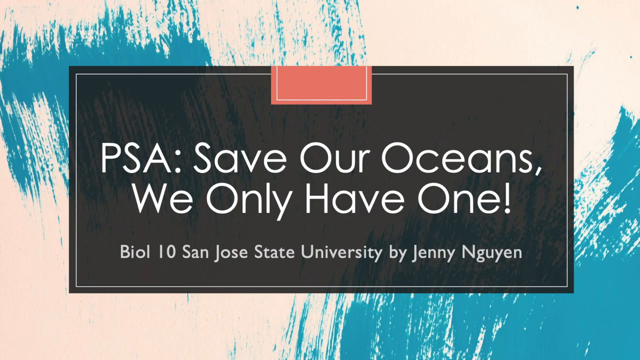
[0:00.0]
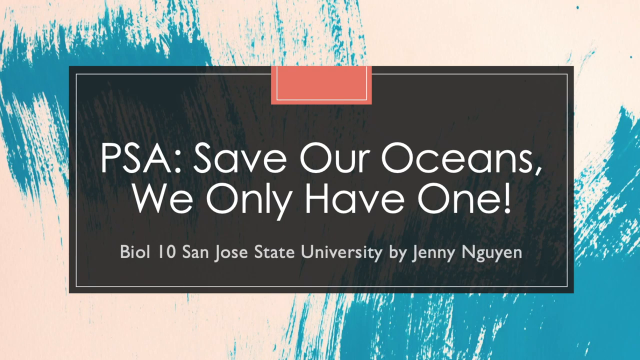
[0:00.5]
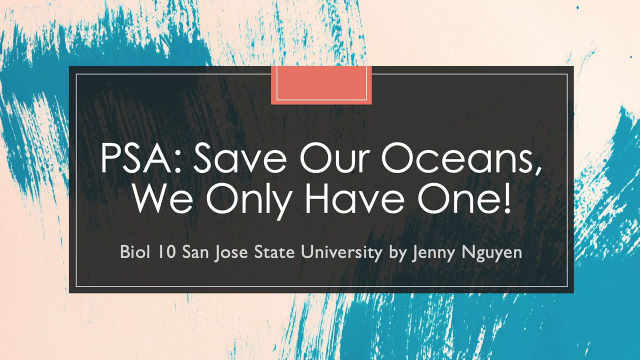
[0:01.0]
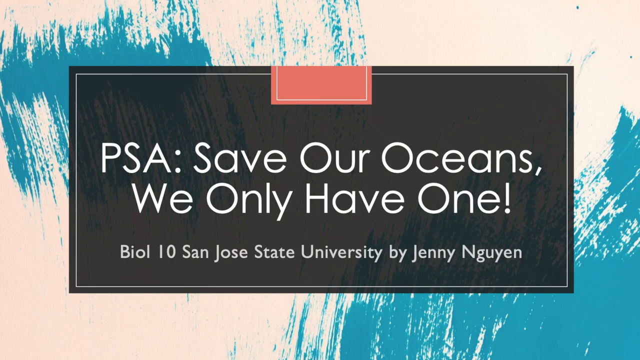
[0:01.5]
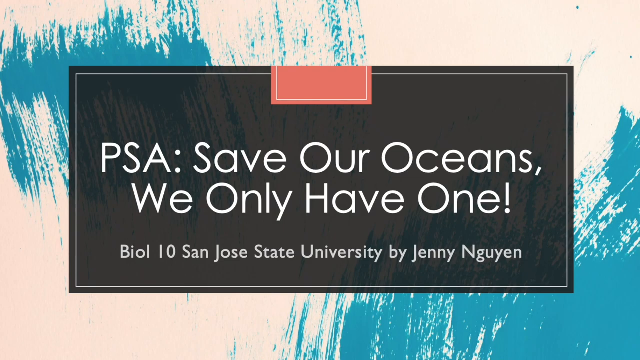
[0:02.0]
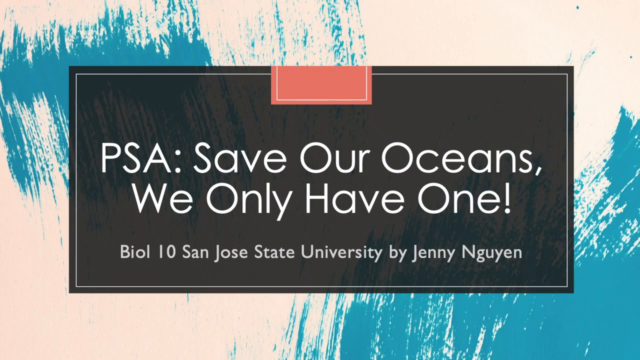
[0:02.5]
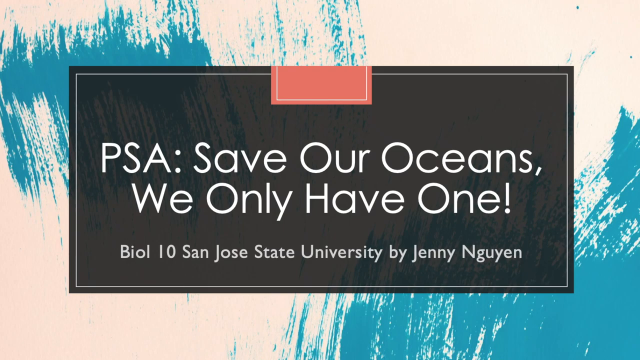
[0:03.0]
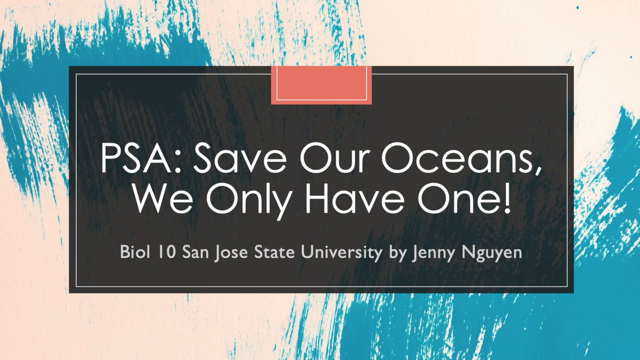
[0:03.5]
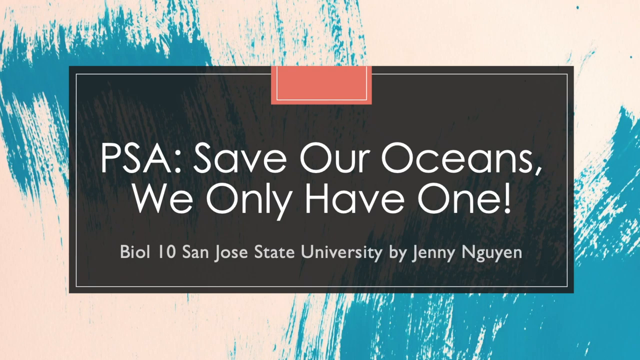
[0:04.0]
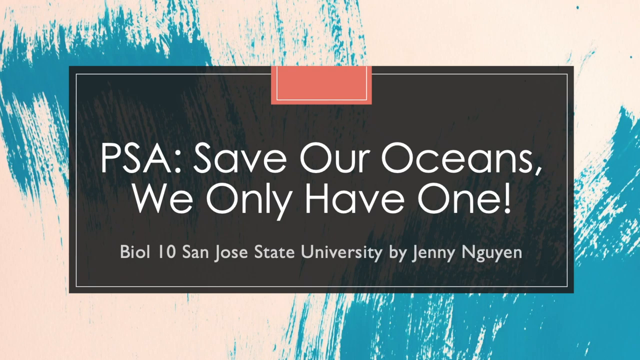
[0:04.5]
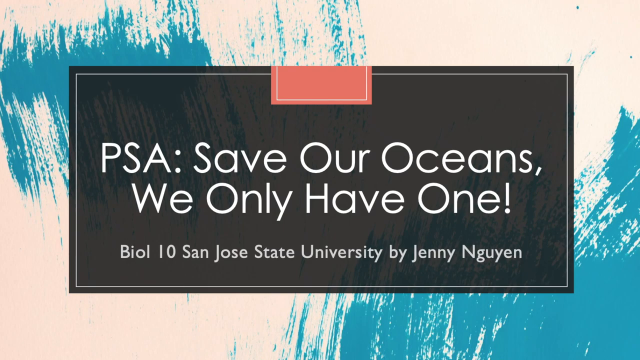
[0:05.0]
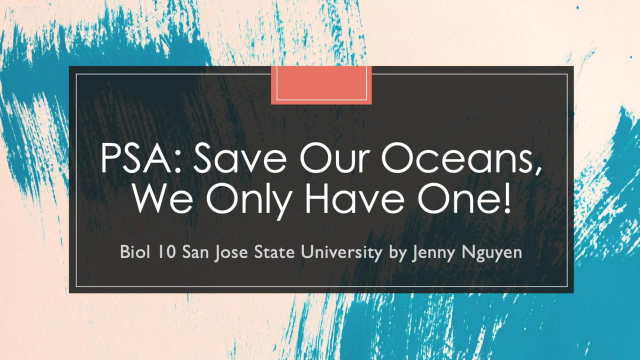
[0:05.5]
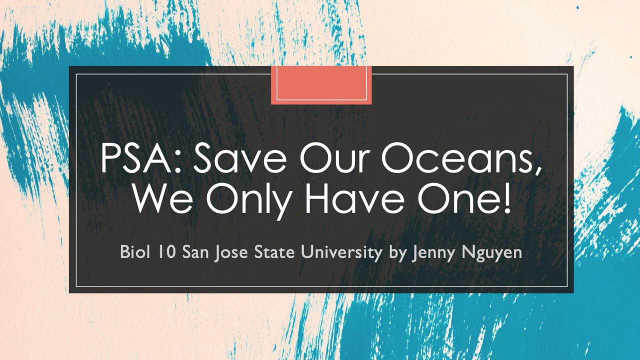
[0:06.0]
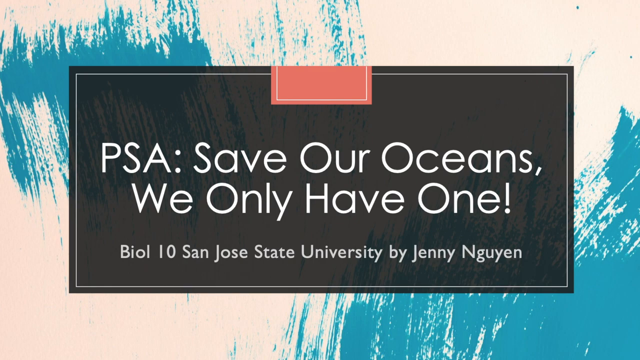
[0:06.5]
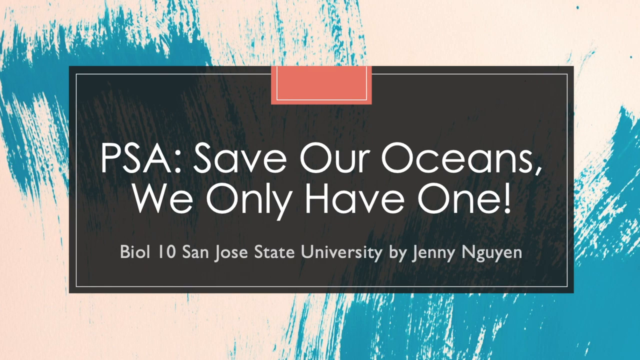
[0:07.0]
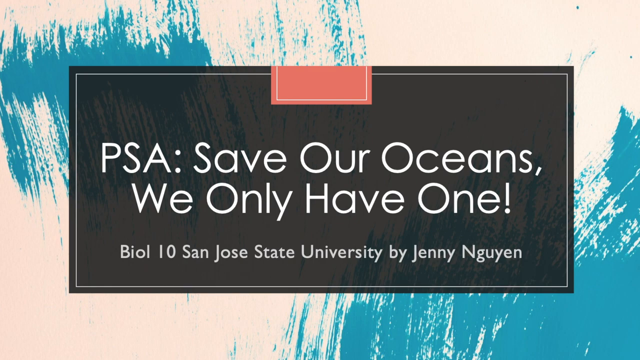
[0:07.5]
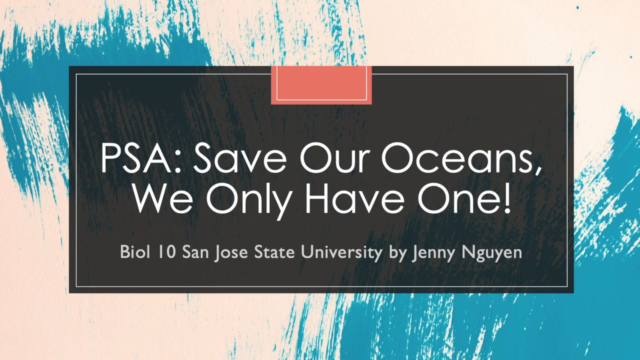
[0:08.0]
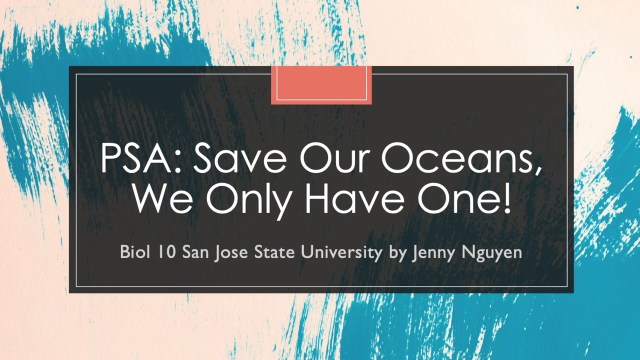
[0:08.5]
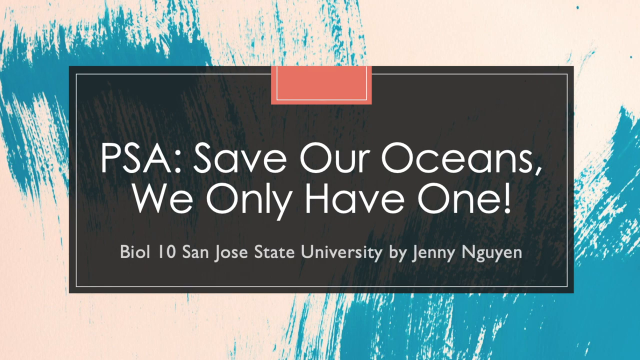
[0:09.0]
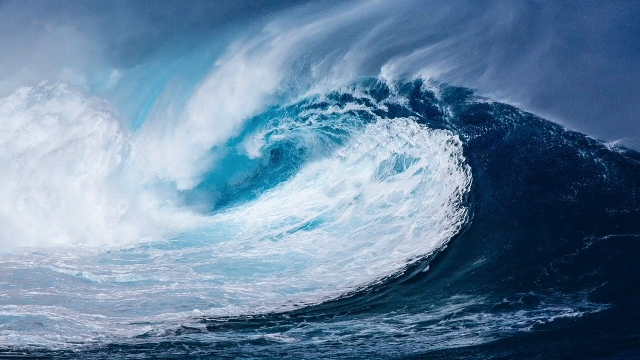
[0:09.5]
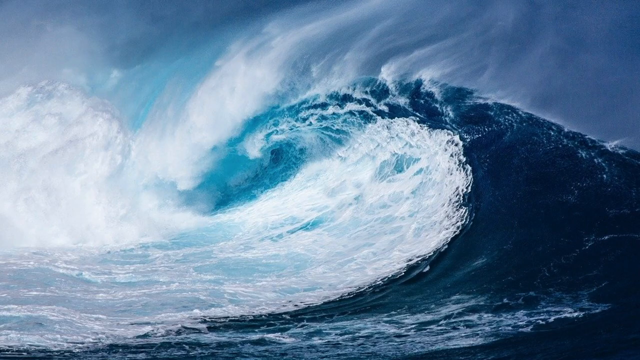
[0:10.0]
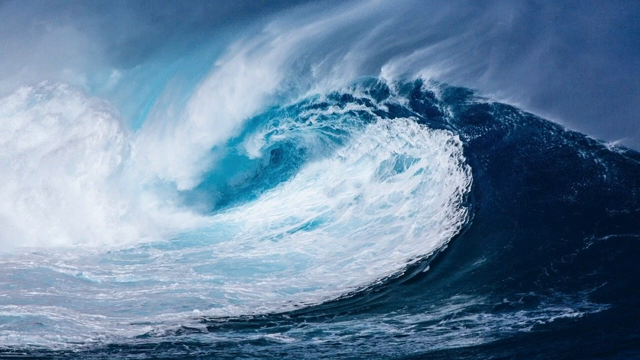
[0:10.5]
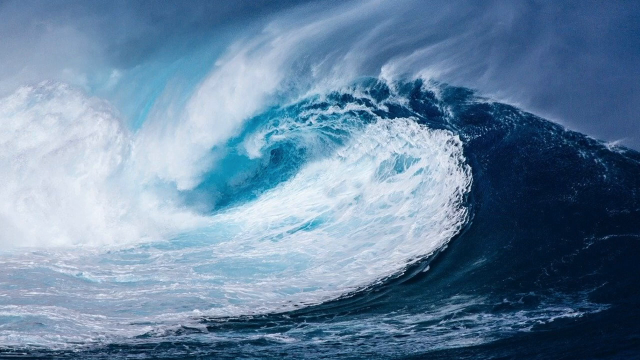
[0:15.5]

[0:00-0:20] The video opens on a title screen that reads "PSA Save Our Oceans We Only Have One" in white font, with the first letter of each word capitalized and "PSA" in all caps; this is the largest text on the screen. Below it, in smaller white text, it says "Bio 10 San Jose State University by Jenny Guillen". The text is on a transparent black rectangular background with a white border, and above it, in the middle of this black background, there is a very light peach-red header rectangle. Behind everything is a multicolored, rugged-looking, paintbrush-style background in beige and turquoise blue. After the title is shown for about 10 seconds, it transitions to an image of a dark blue wave heading toward the shore.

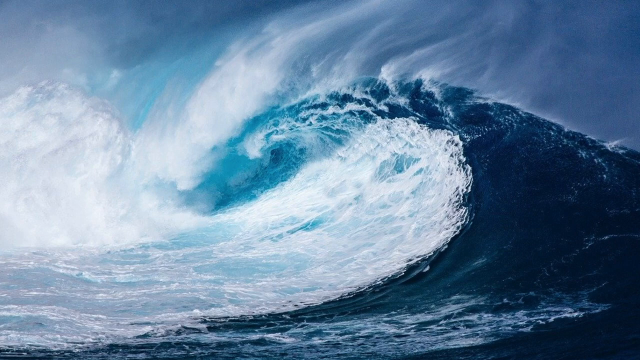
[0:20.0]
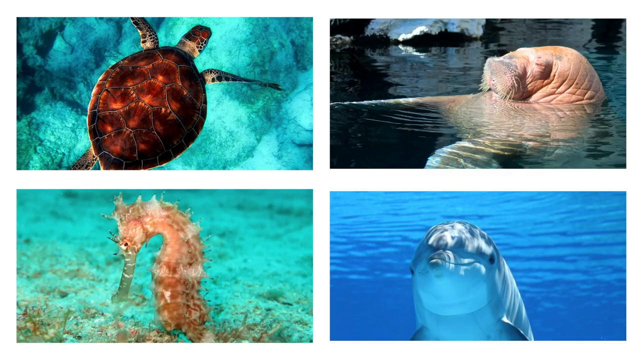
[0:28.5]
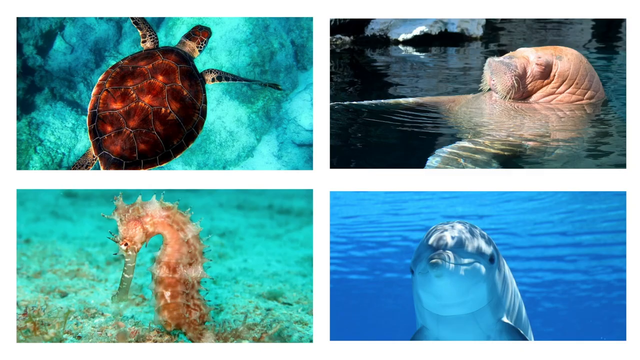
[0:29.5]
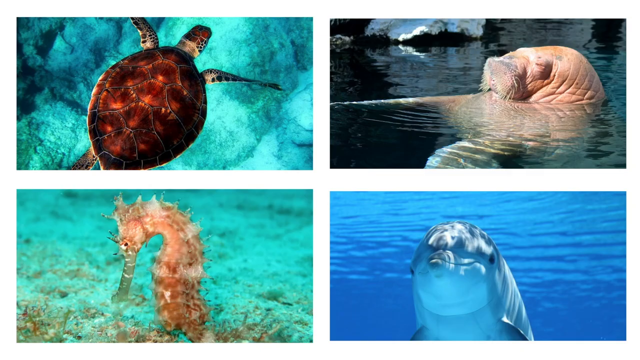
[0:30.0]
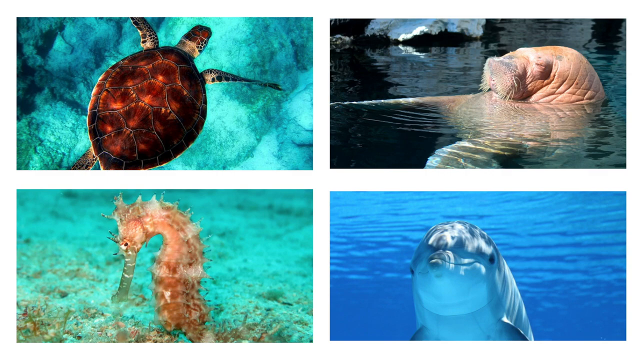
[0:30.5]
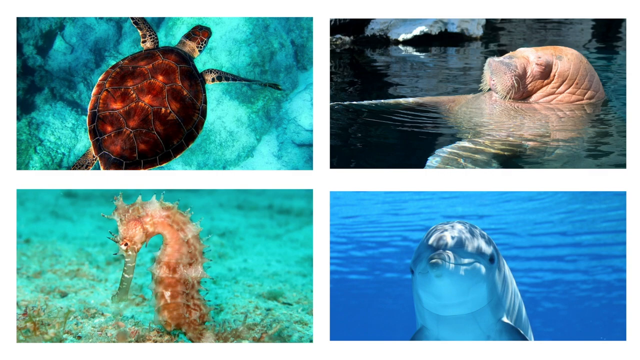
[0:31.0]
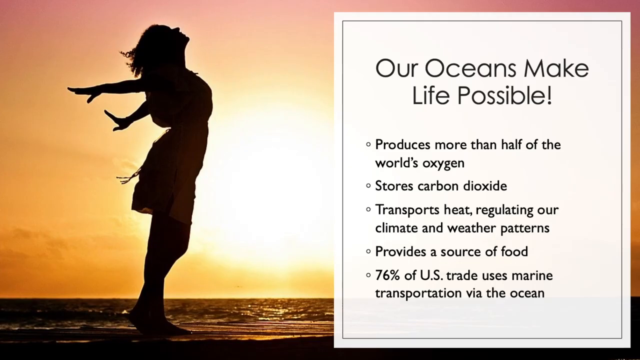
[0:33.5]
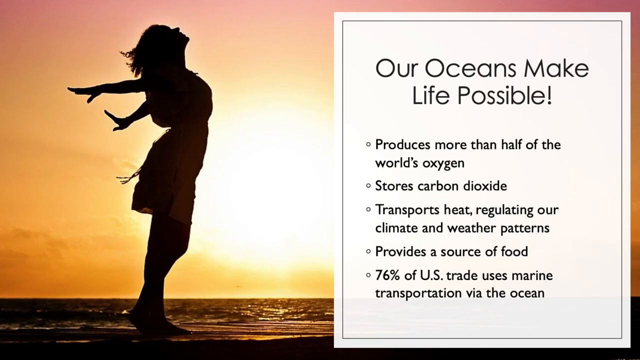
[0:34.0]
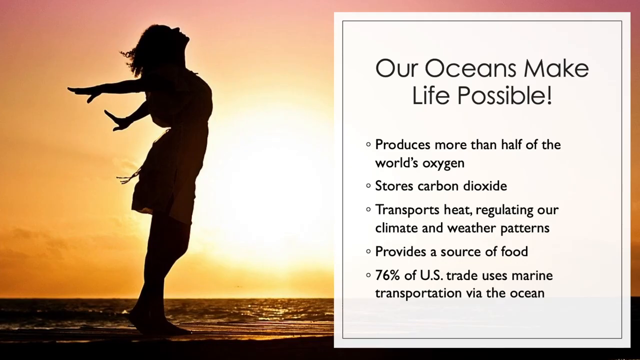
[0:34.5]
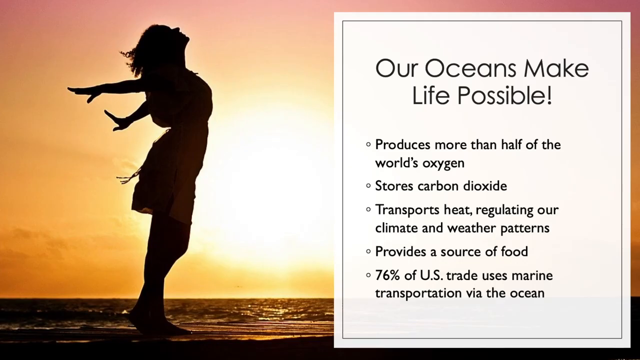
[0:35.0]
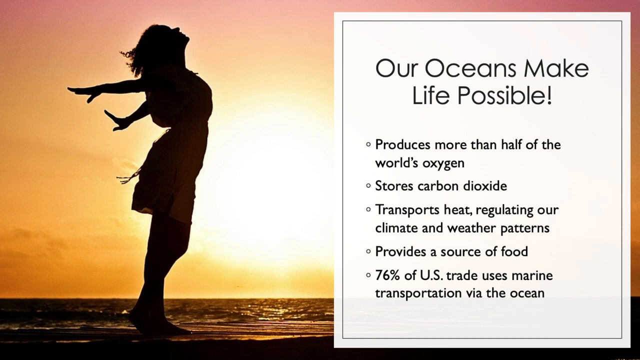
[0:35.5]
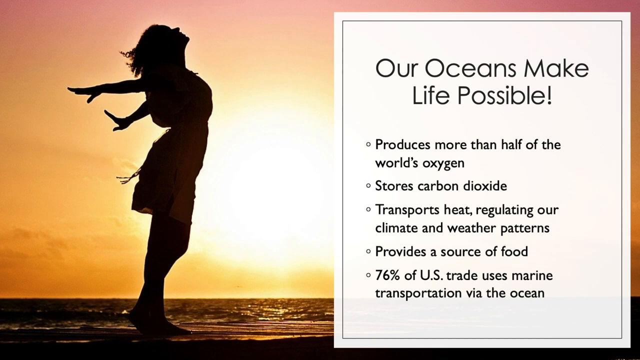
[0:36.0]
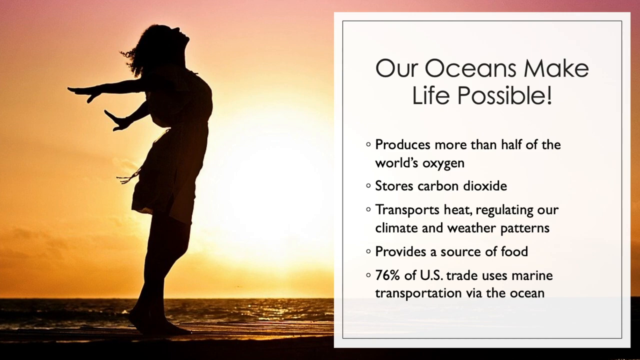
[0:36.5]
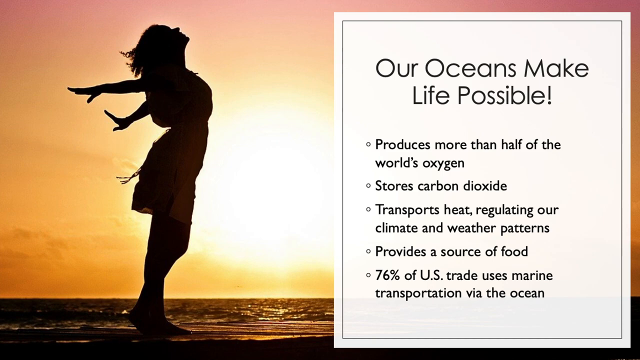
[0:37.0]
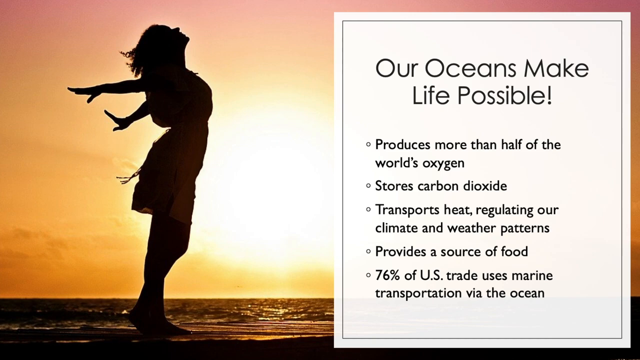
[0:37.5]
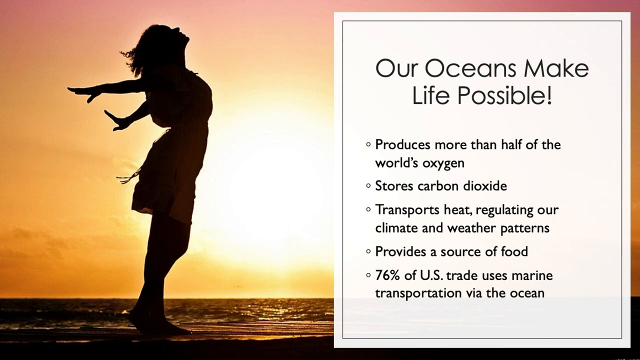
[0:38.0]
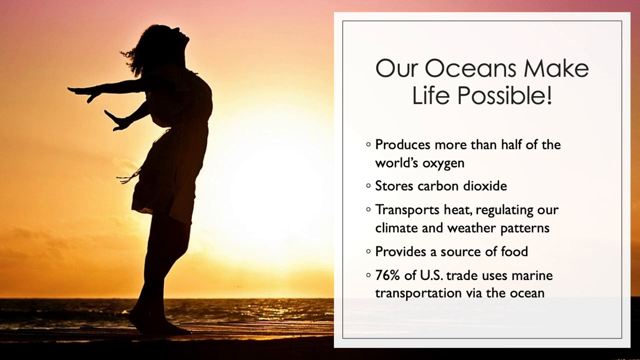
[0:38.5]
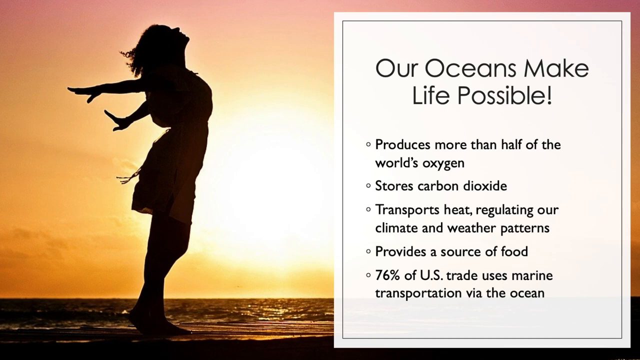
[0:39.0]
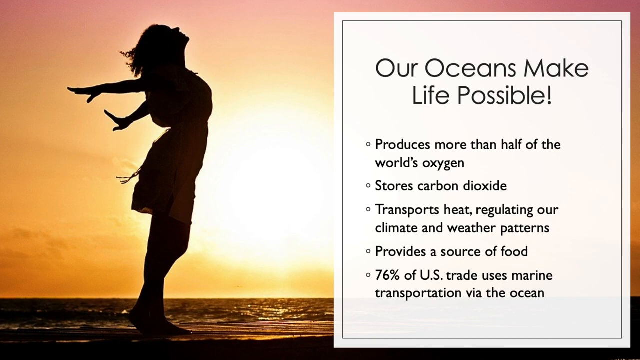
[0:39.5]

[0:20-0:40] For the first five to six seconds, the same wave is shown, forming and going down toward the left with white foam interspersed. As it moves left and curves, it turns lighter and lighter in color, and on the left it is mostly white sea foam that is turning back toward the wave. The background is lighter, with a blue sky. The screen then transitions to four images of different sea animals, one in each corner: in the top left, a dark brown sea turtle swims across light blue turquoise water; in the top right, what looks like a beige walrus floats in dark blue water; in the bottom left, a beige-peach seahorse is in very light turquoise water; and in the bottom right, a gray and white dolphin looks at the camera in regular blue water. The screen then transitions to an image of a silhouette.